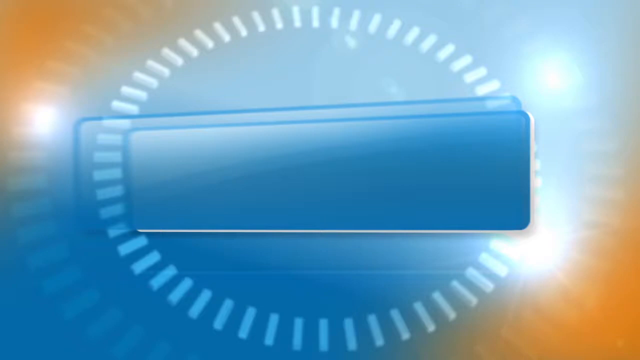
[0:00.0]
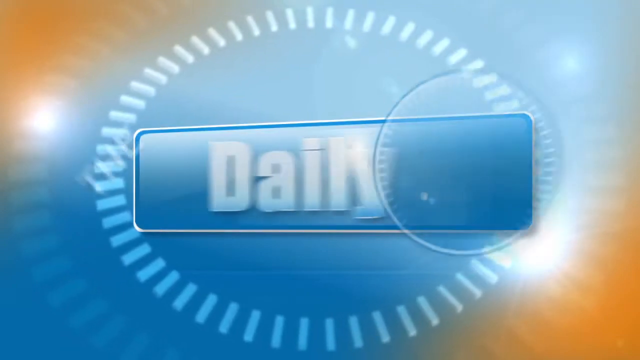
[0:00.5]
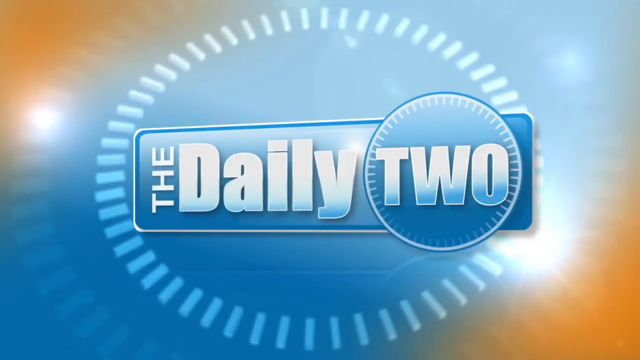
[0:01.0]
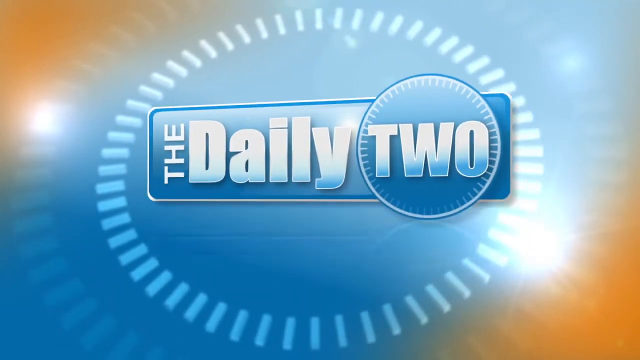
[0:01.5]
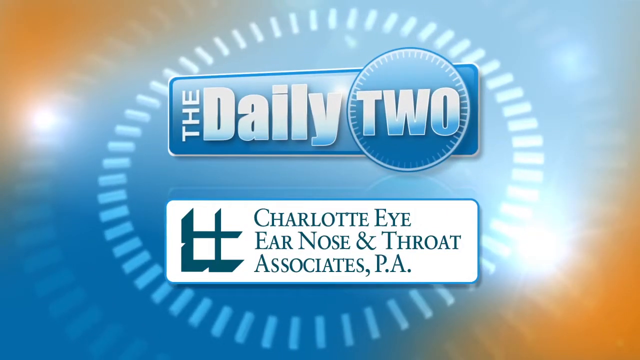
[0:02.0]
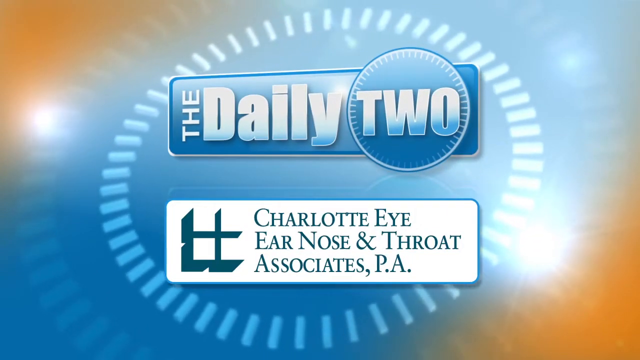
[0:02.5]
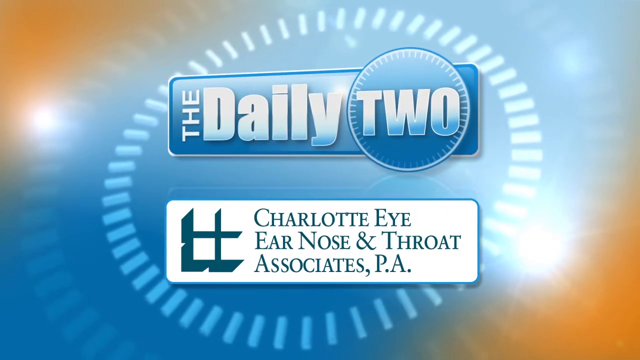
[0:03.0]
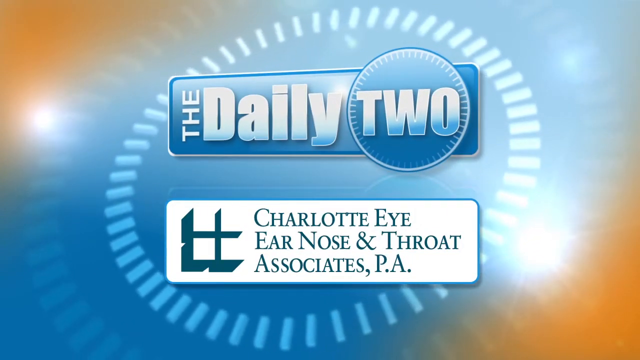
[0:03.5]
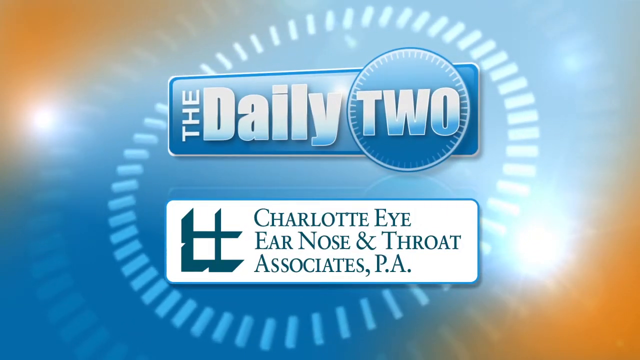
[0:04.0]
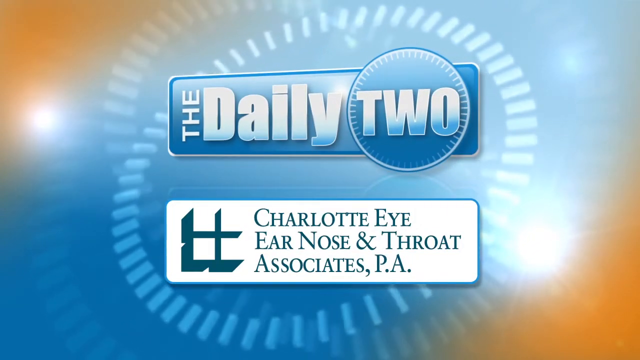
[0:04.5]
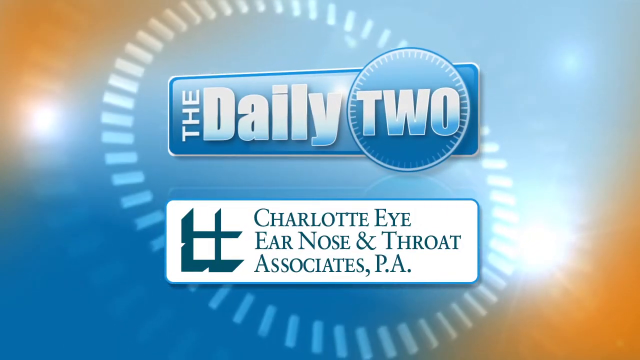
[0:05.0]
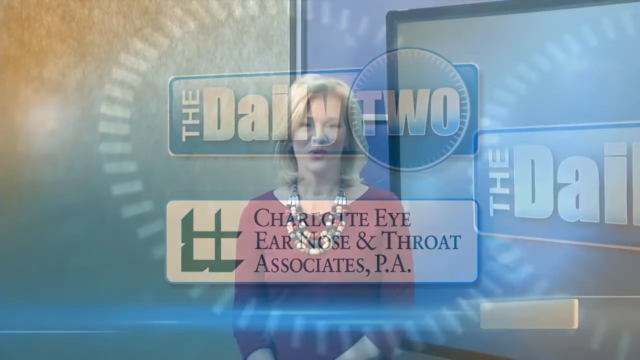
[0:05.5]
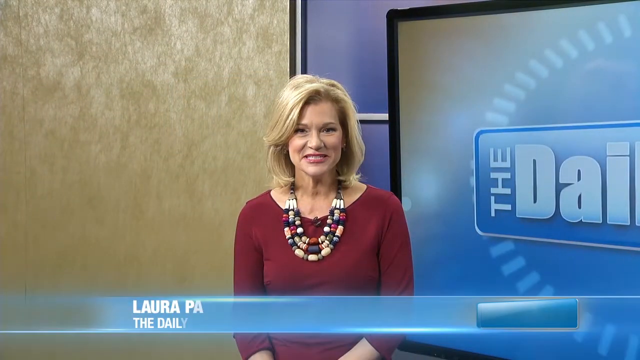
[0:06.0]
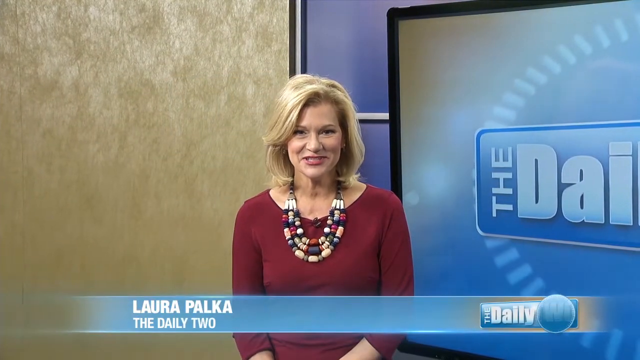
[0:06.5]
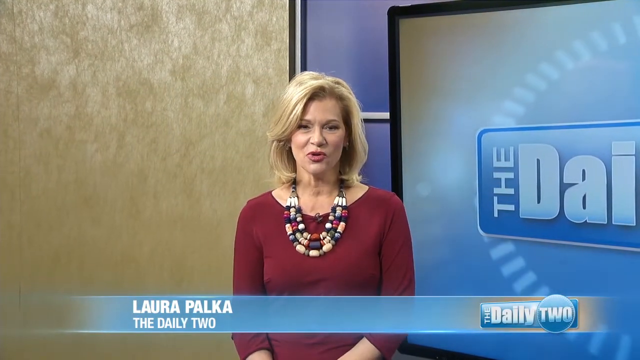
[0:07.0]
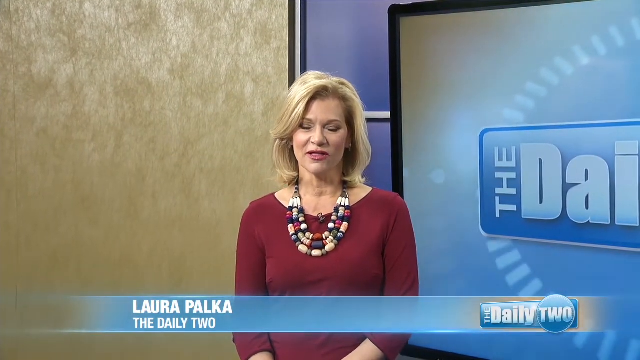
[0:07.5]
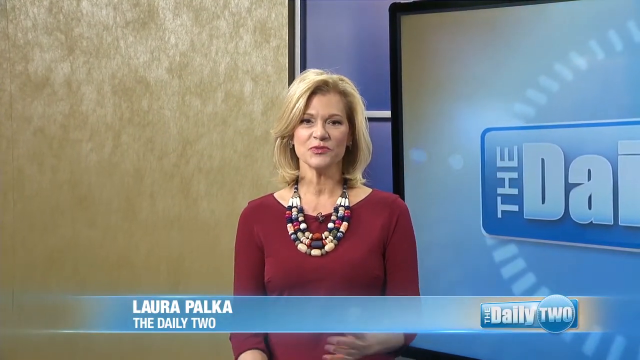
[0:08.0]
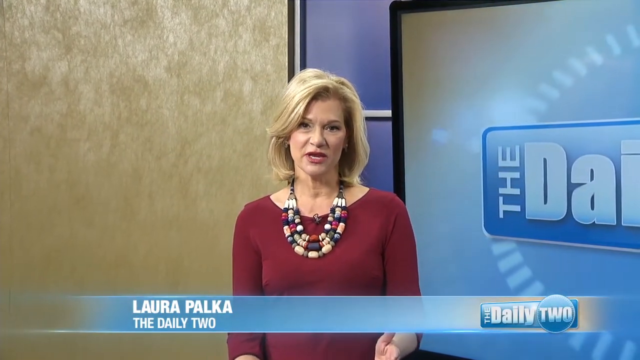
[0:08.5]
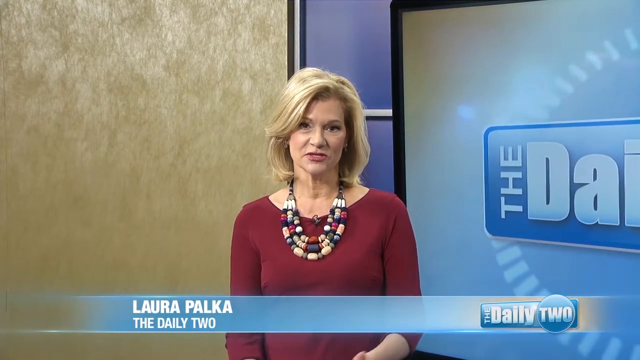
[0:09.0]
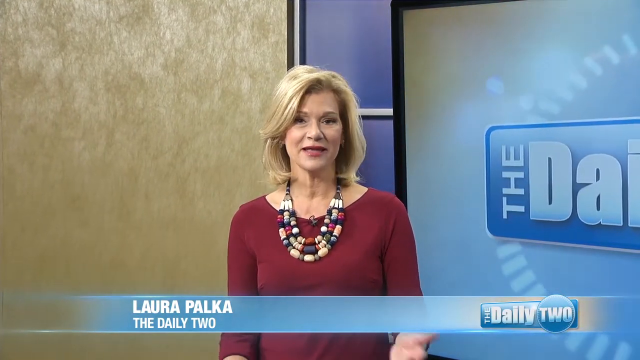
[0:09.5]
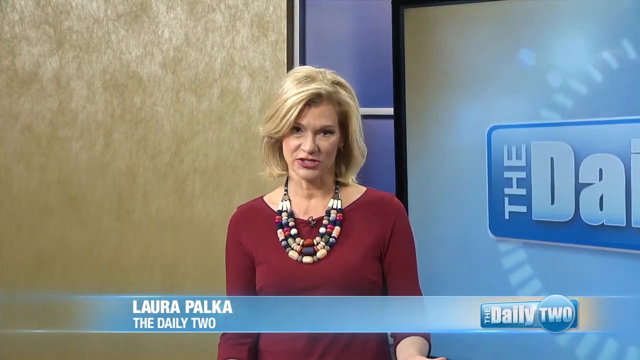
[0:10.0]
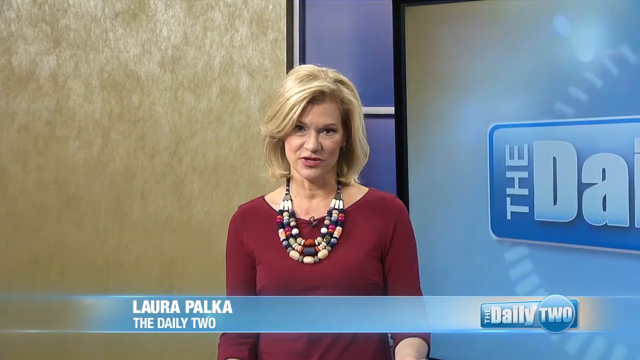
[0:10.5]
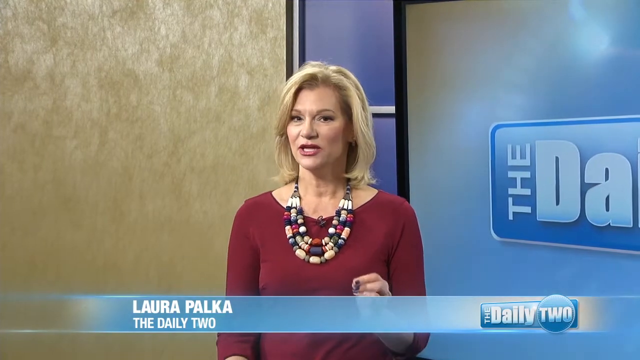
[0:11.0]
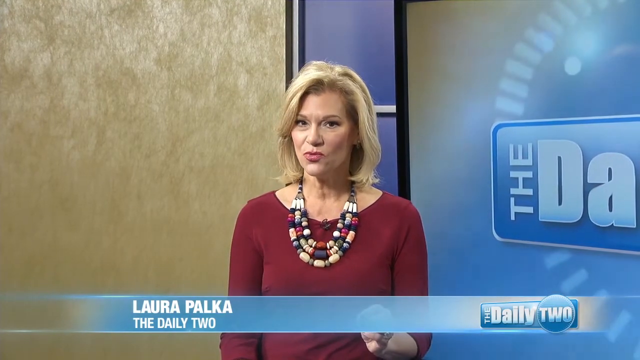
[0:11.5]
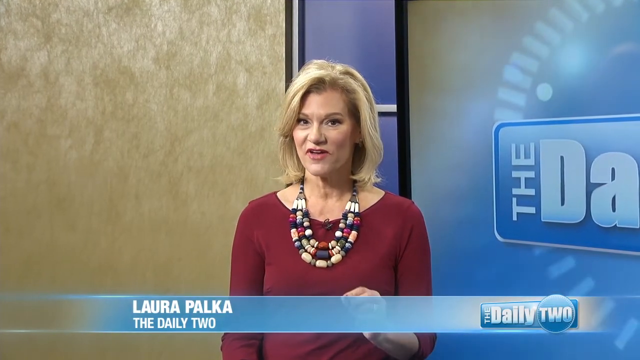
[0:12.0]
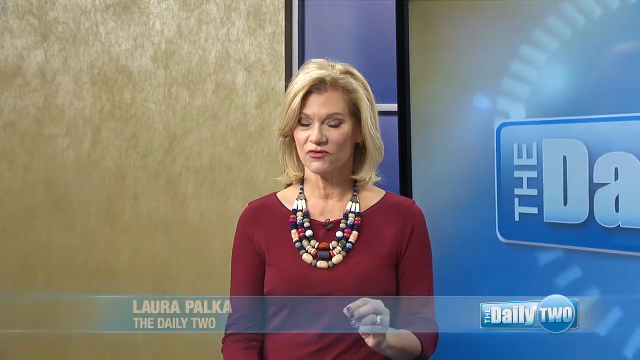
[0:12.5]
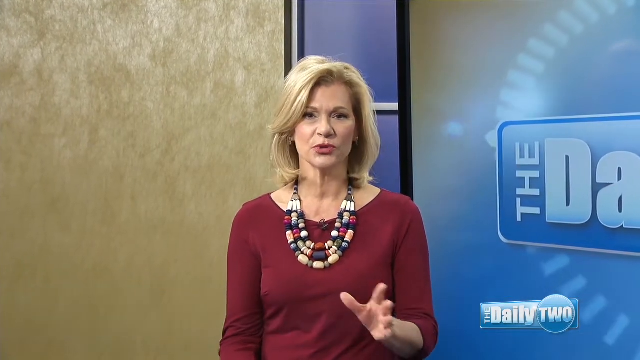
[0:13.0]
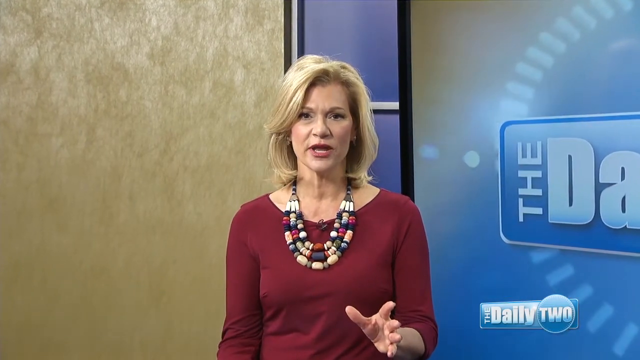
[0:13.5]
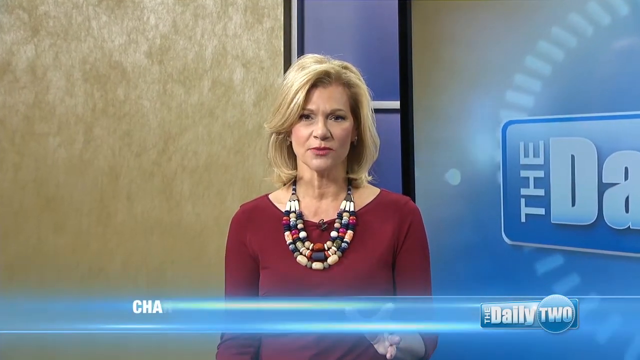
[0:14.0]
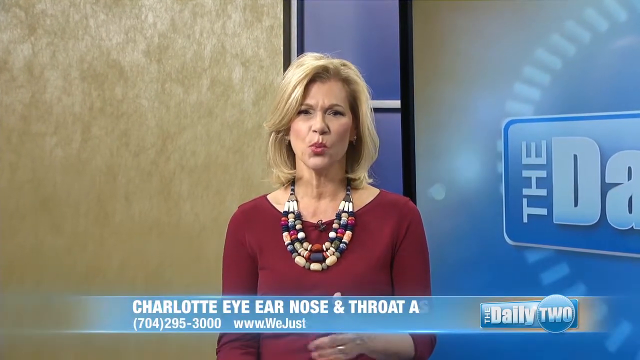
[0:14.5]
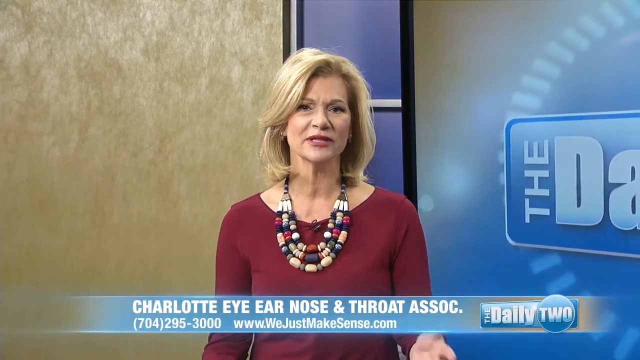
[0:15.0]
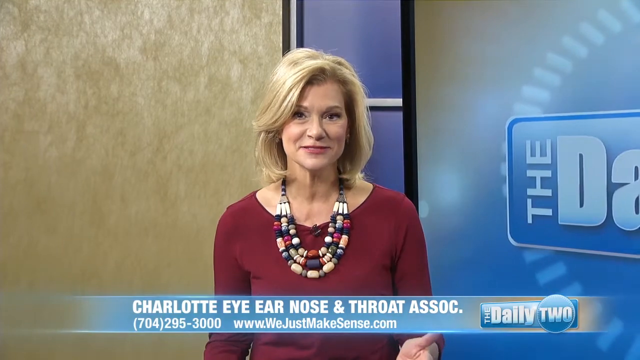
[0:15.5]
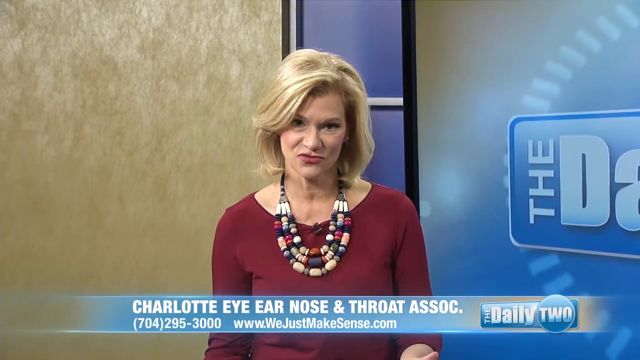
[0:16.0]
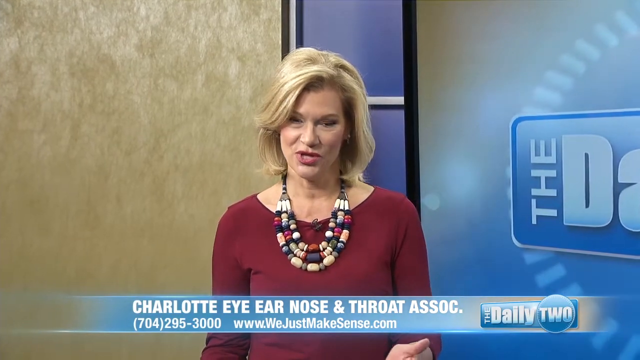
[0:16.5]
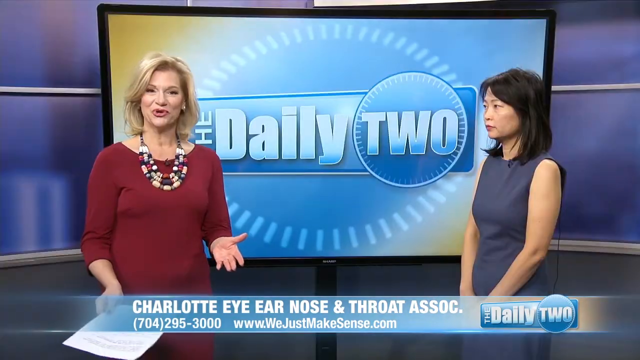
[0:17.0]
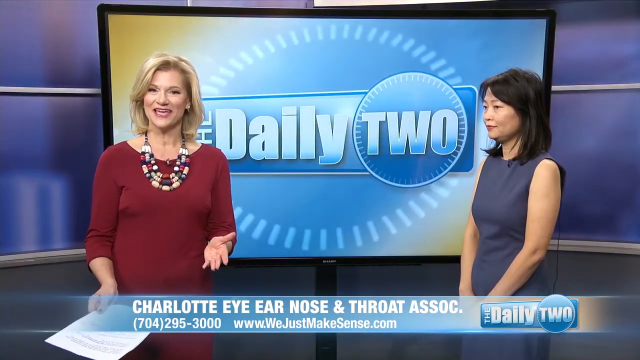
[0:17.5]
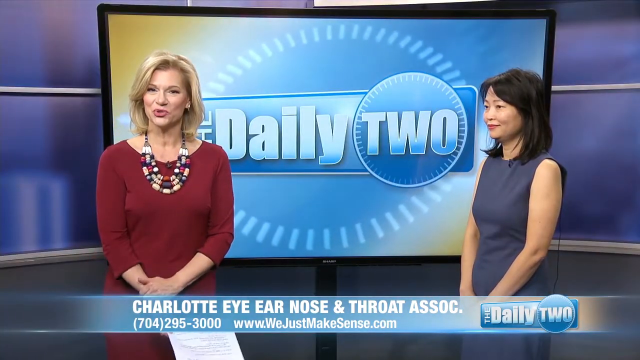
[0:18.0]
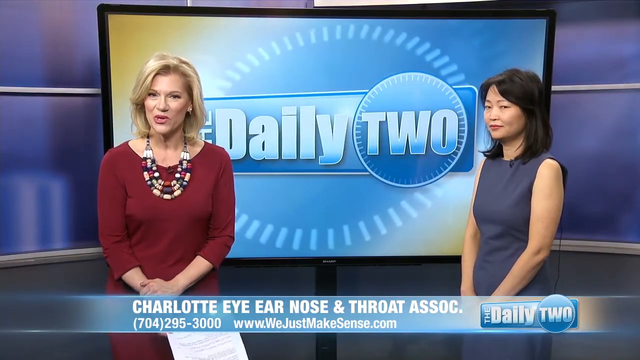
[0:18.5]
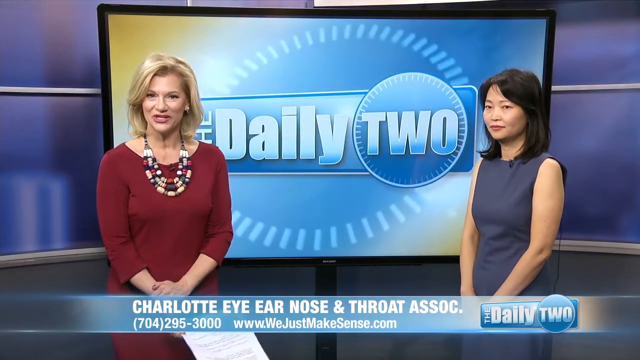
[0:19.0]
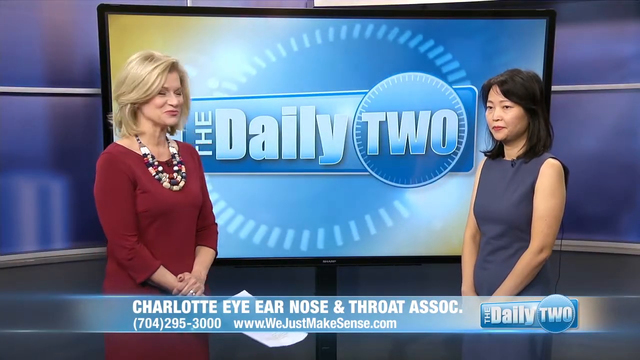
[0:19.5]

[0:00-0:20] On-screen text reads "the Daily 2", with "Charlotte Eye Ear Nose and Throat" and "Associates, P.A." beneath it. A woman who looks like a news anchor is talking. She wears a burgundy top, and it is unclear whether it is a dress or a shirt. The sign is on the right side, and at the bottom white text reads "Laura Palka"; "the Daily 2" also appears on the lower right side. She smiles as she talks; she has blonde hair in a layered haircut and uses her left hand. An advertisement appears, possibly related to what she is talking about, reading "Charlotte Eye Ear Nose and Throat Association", the number "705-295-3000", and "www.wejustmakesense.com".